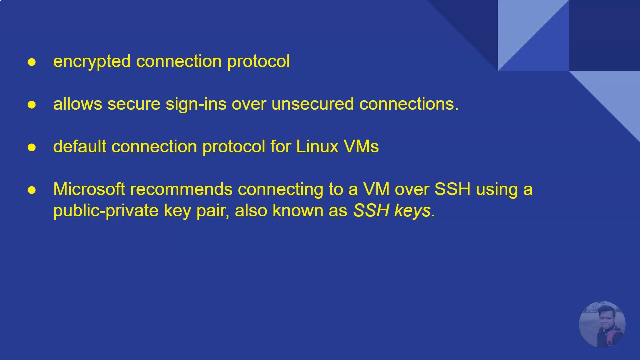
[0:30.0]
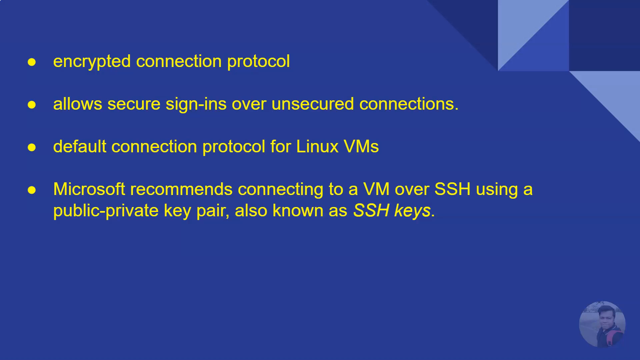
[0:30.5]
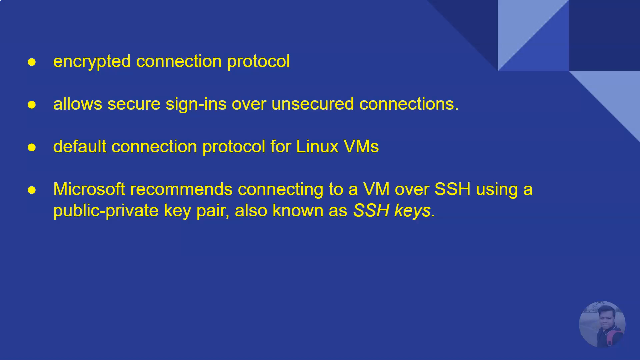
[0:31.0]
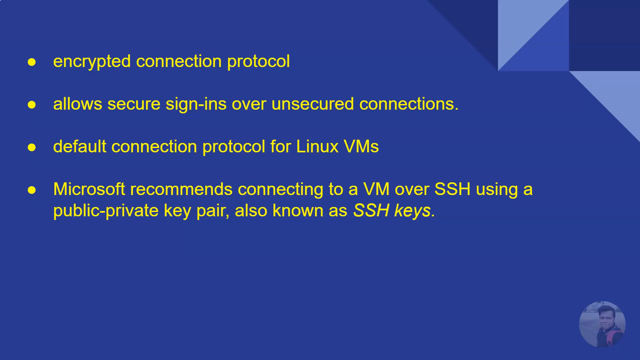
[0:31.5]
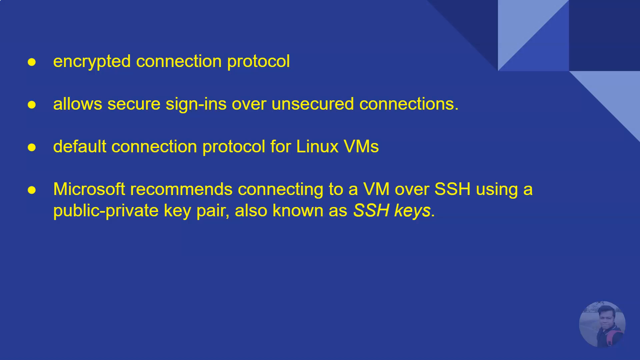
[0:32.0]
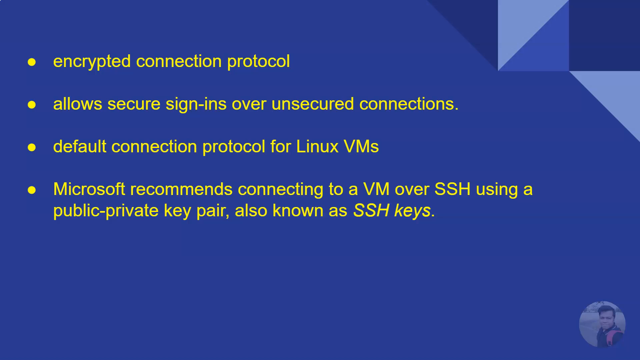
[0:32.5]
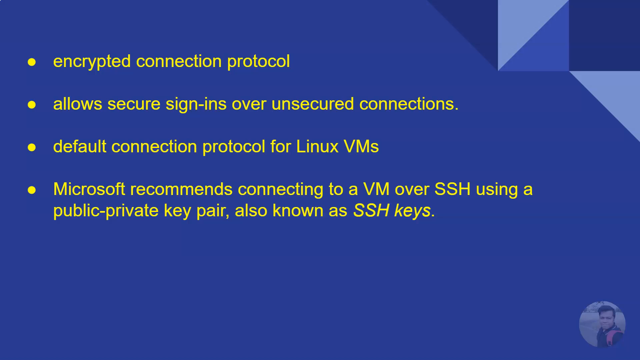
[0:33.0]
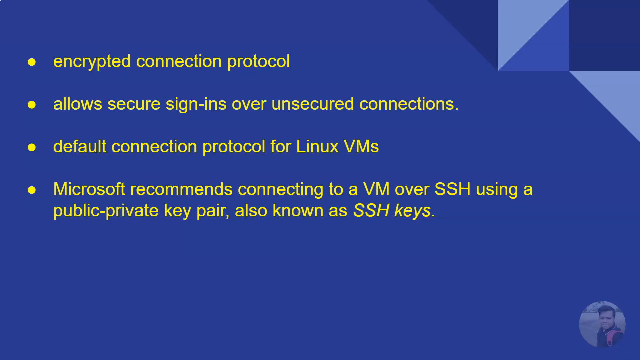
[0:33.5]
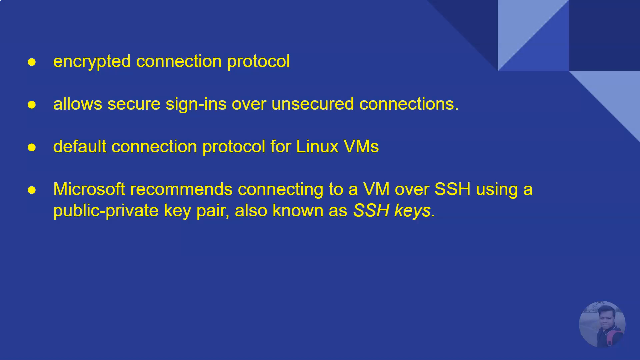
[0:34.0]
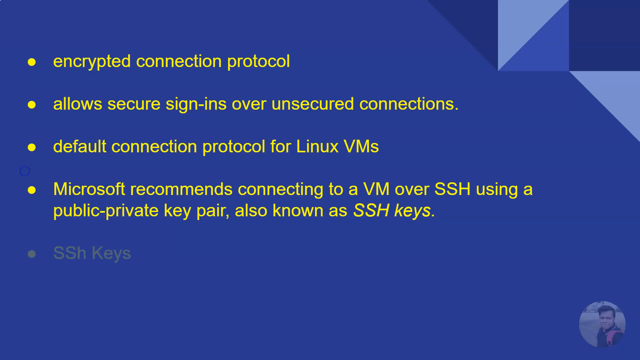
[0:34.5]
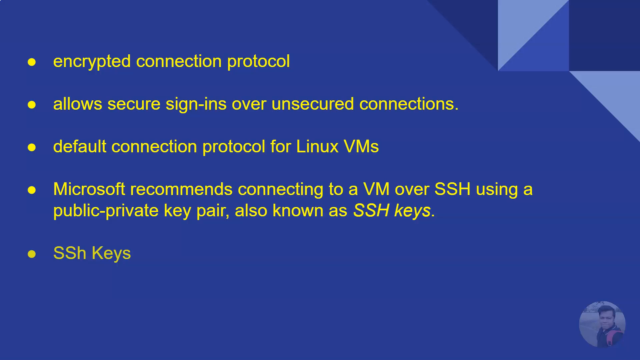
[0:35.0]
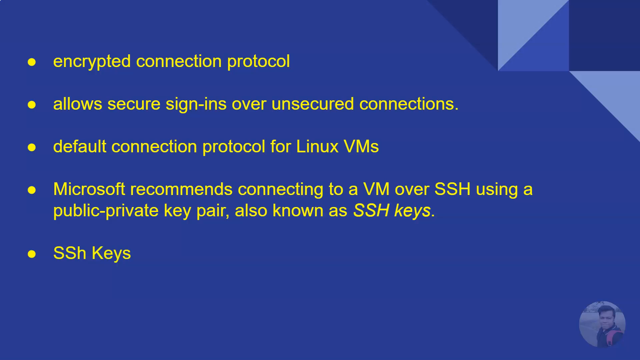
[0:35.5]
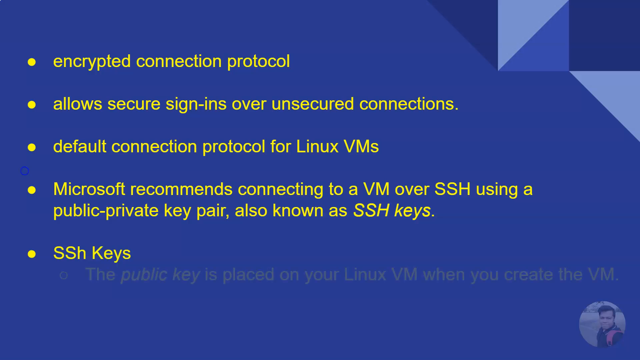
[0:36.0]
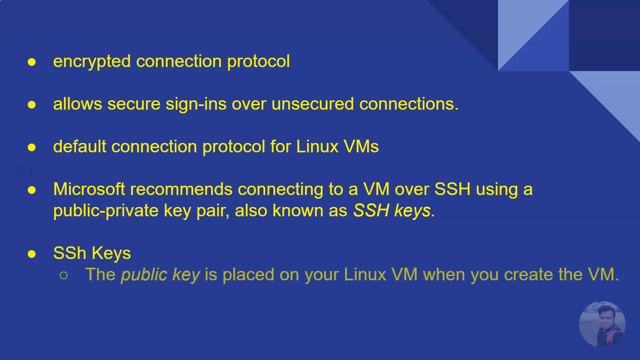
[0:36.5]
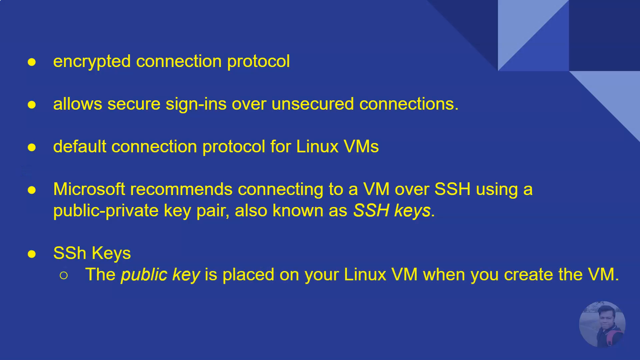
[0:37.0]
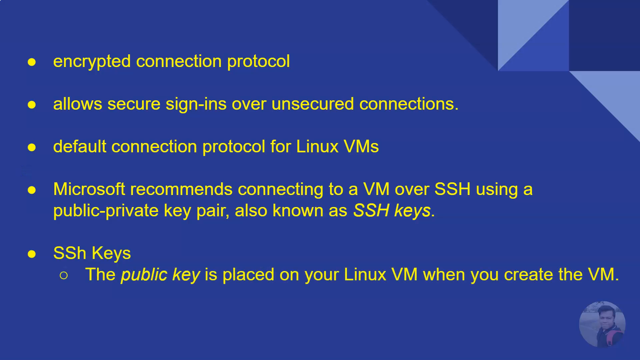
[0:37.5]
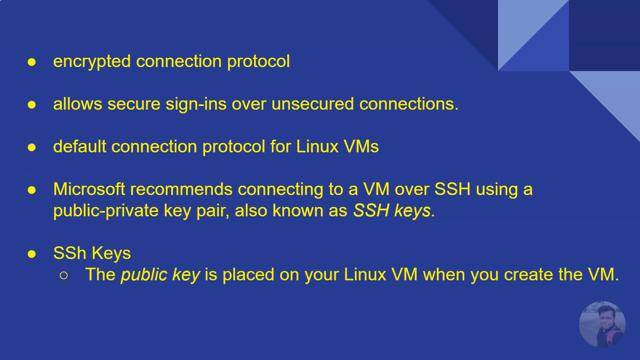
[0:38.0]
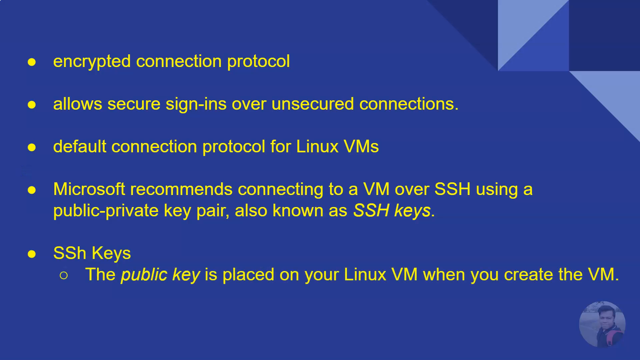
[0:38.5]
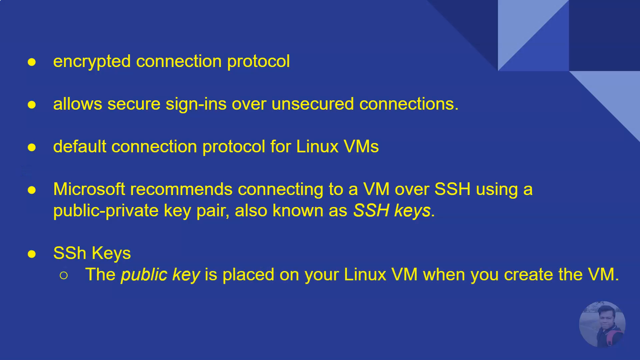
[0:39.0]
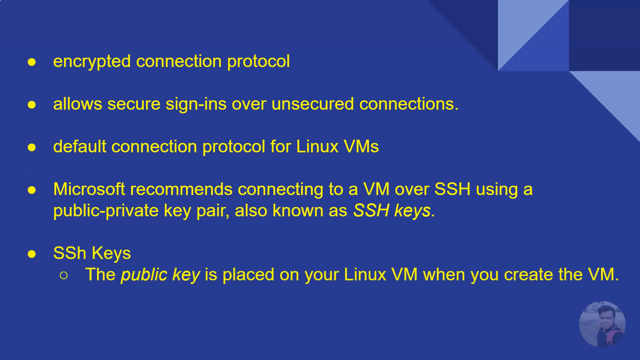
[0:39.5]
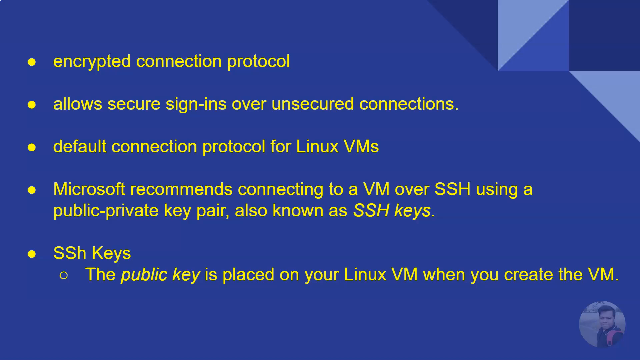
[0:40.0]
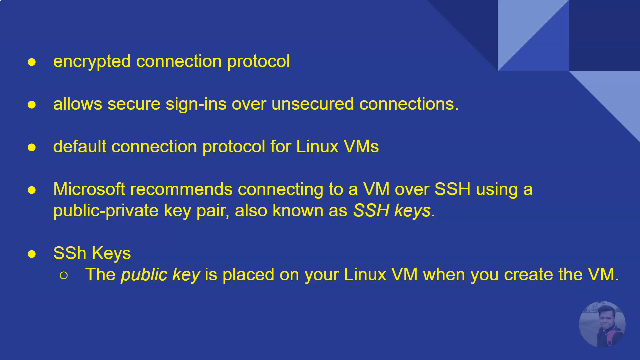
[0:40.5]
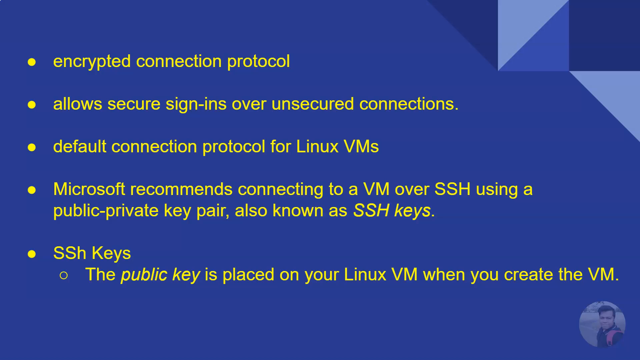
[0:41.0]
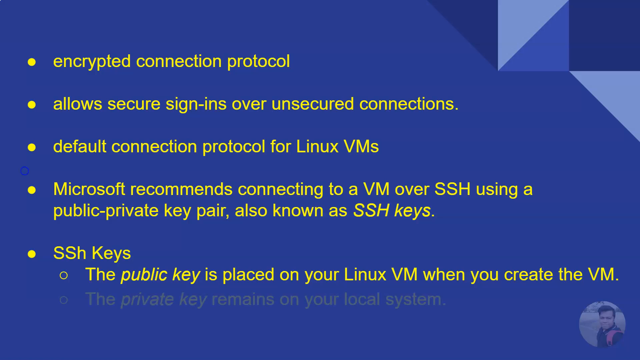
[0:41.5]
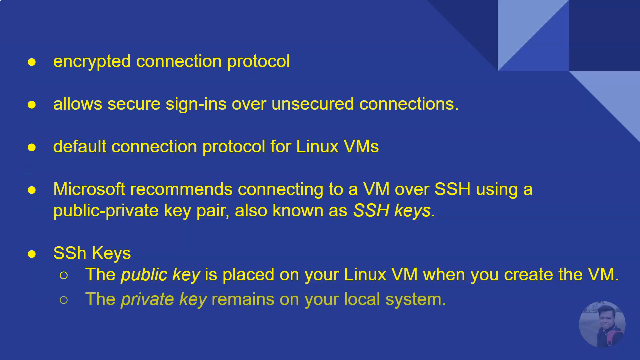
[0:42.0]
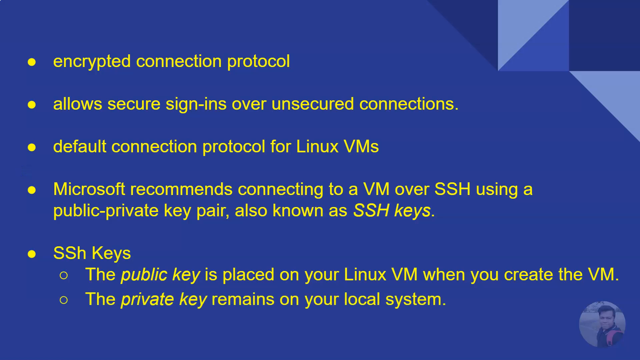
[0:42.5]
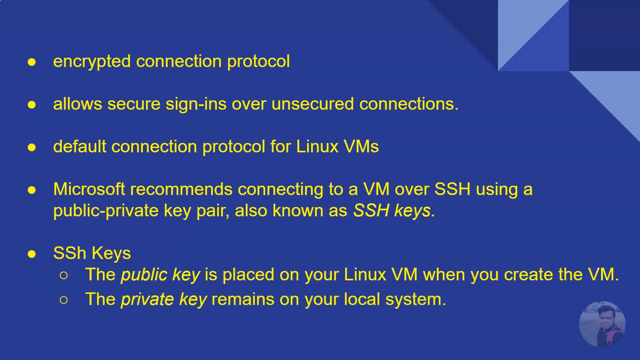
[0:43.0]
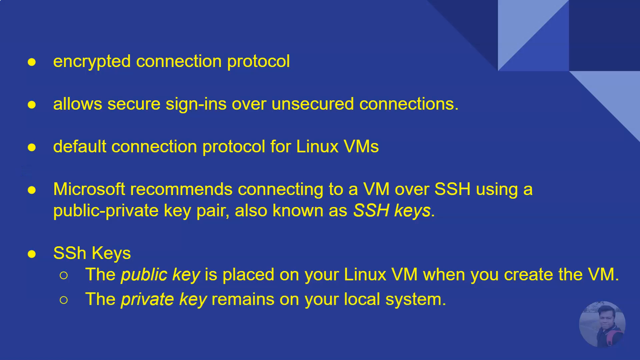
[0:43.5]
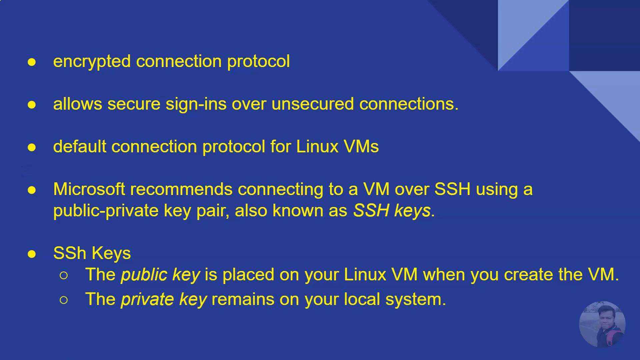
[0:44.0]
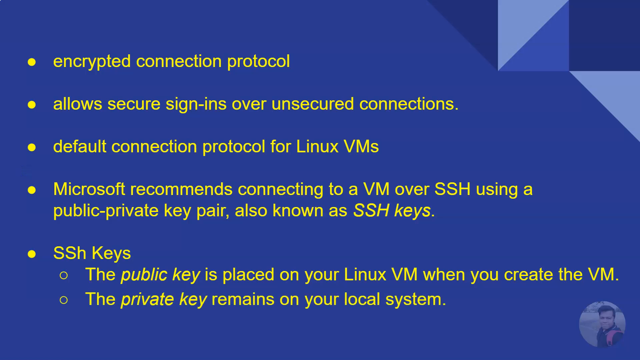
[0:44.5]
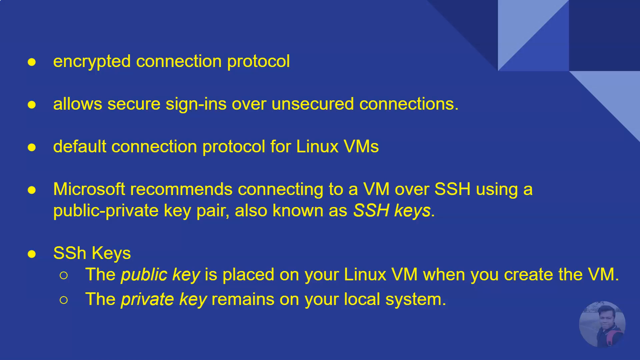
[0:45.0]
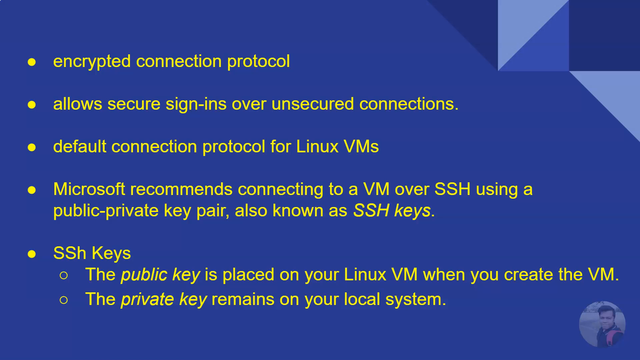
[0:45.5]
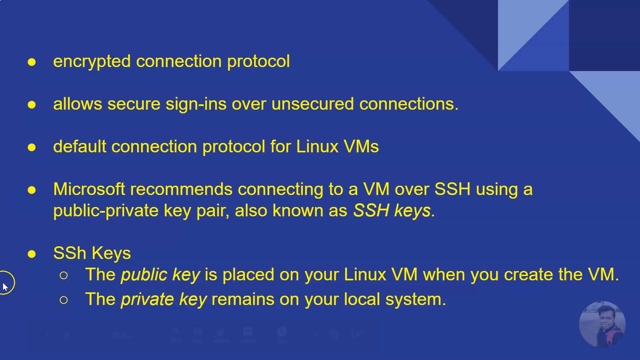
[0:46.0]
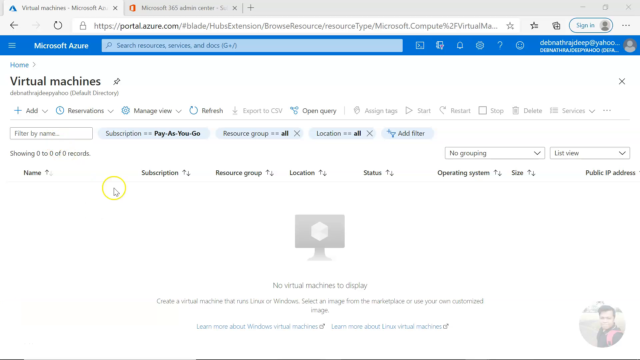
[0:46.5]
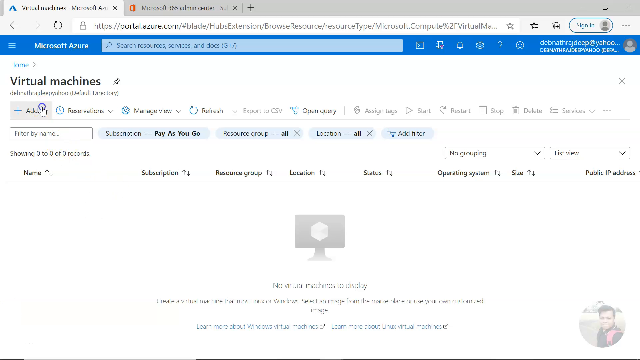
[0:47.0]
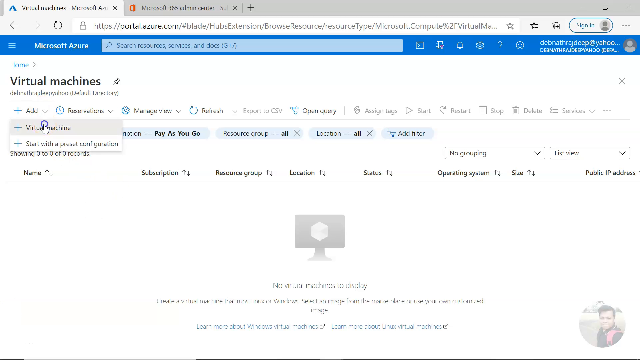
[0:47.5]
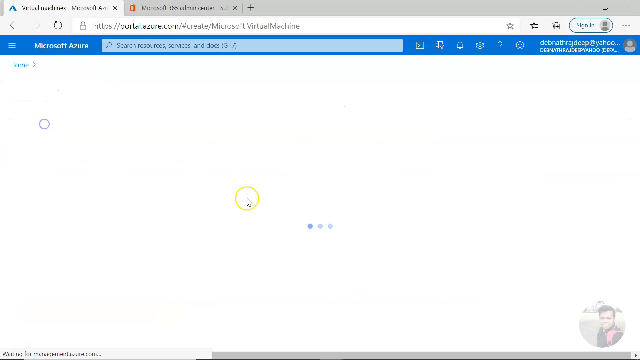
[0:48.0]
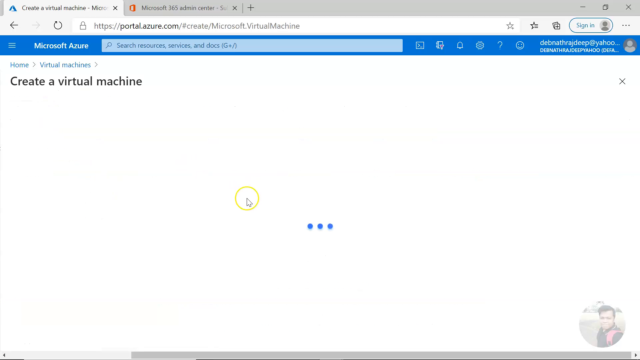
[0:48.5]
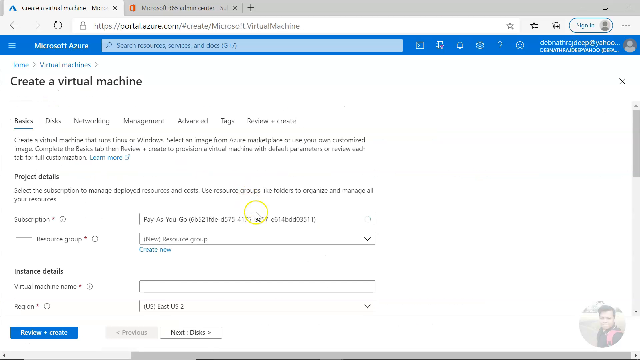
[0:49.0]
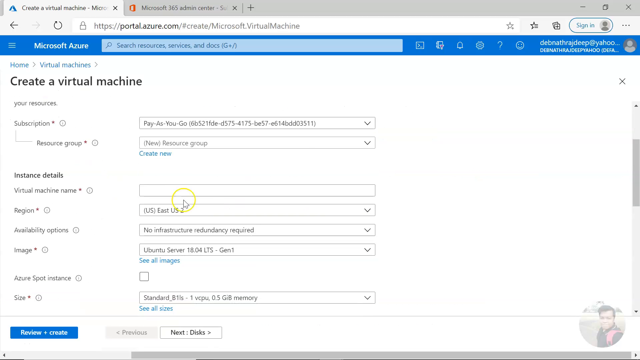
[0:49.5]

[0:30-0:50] The dark blue screen has geographic designs such as triangles and squares in the right-hand corner, in darker and lighter shades of blue. In the bottom right is a circular avatar that looks like an Indian man standing outside taking a selfie. In the top left, a bullet point in yellow font reads "Encrypted connection protocol". Underneath are bullet points reading "Allows secure sign-ins over unsecured connections", "Default connection protocol for Linux VMs", and "Microsoft recommends connecting to a VM over SSH using a public-private key pair, also known as SSH keys". The last bullet point reads "SSH keys", with a hollow sub-bullet underneath and to the right reading "The public key is placed on your Linux VM when you create the VM" and another sub-point below it reading "The private key remains on your local system". A browser then opens to the portal.azure.com site, showing a page for virtual machines. The cursor clicks an add button at the top left of the page, a drop-down menu appears, and the cursor clicks virtual machine. This leads to a page with the heading "Create a virtual machine" and tabs reading "Basics", "Disks", "Networking", "Management", "Advanced", "Tags" and "Review plus create", with project details below. The cursor clicks the "create new" link under the new resource group drop-down menu.